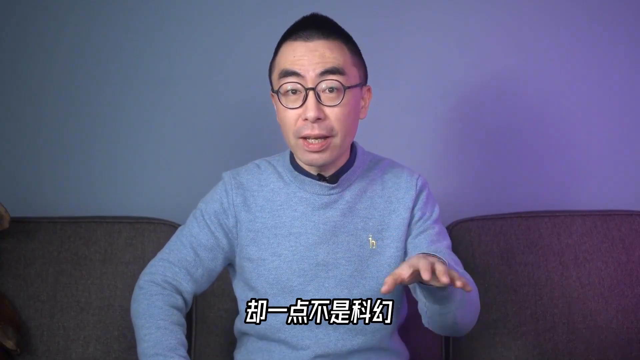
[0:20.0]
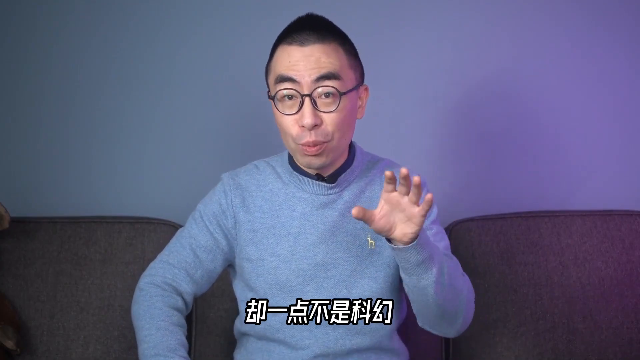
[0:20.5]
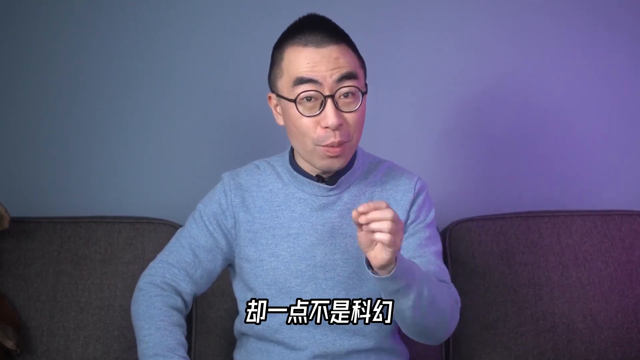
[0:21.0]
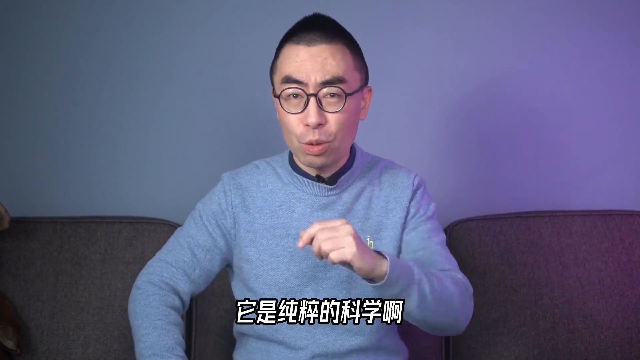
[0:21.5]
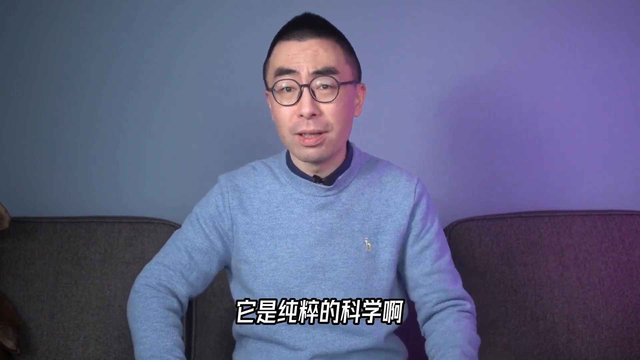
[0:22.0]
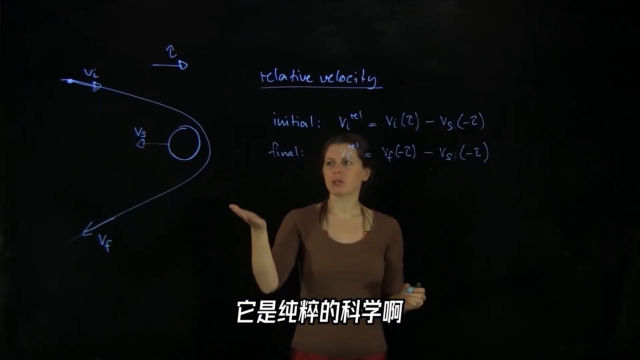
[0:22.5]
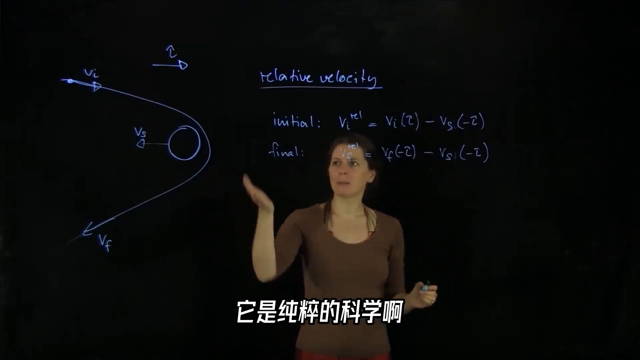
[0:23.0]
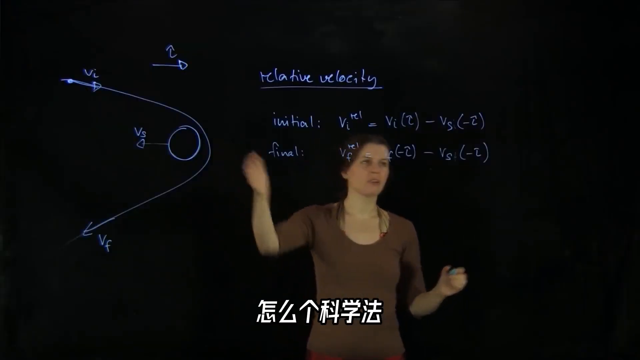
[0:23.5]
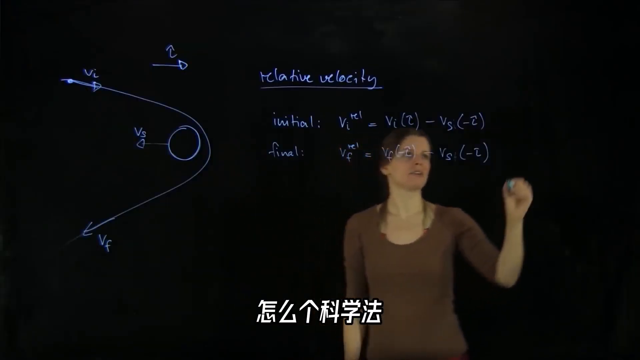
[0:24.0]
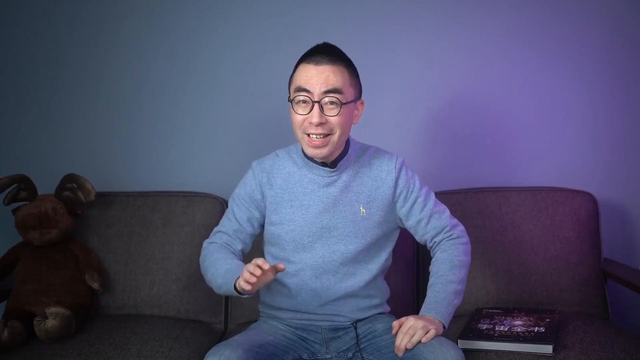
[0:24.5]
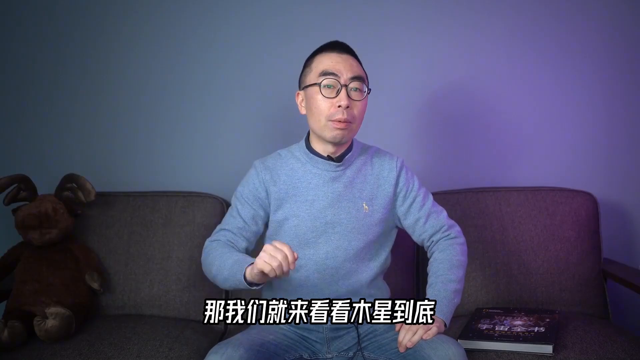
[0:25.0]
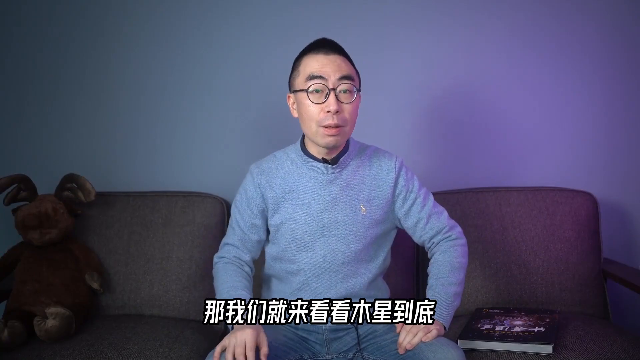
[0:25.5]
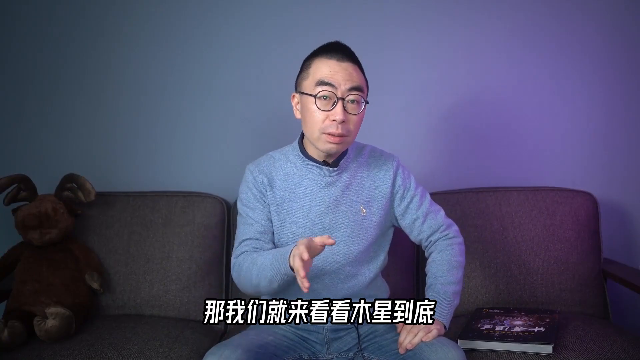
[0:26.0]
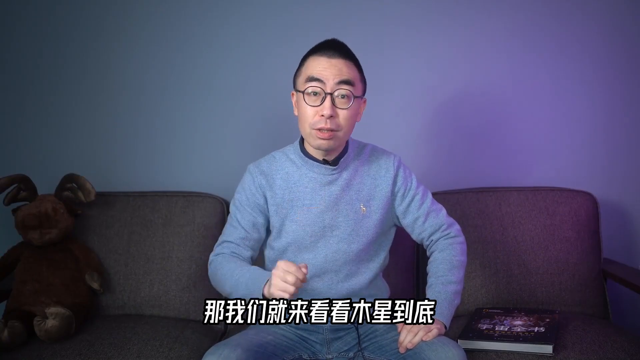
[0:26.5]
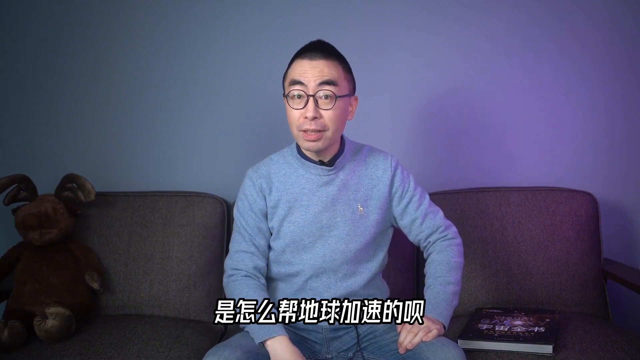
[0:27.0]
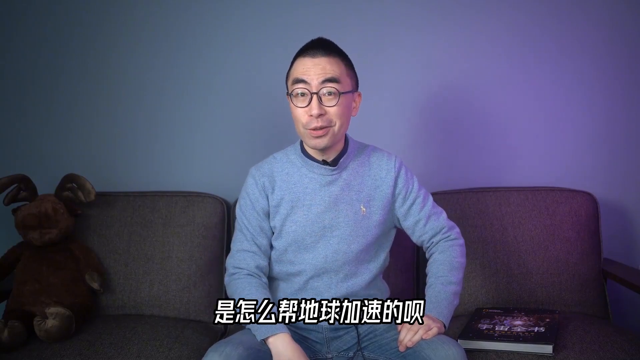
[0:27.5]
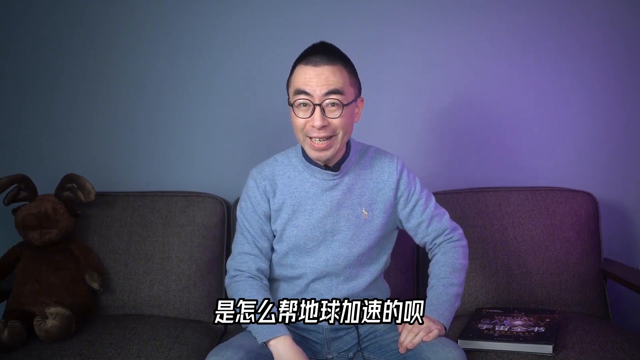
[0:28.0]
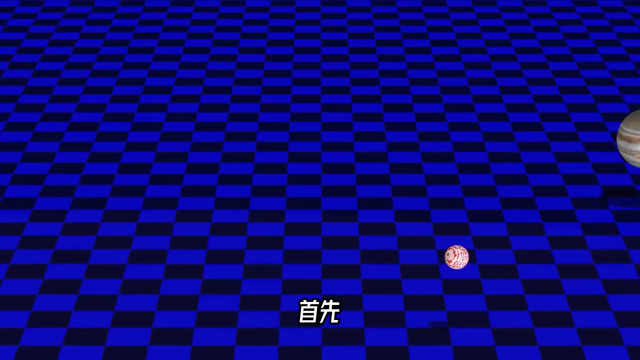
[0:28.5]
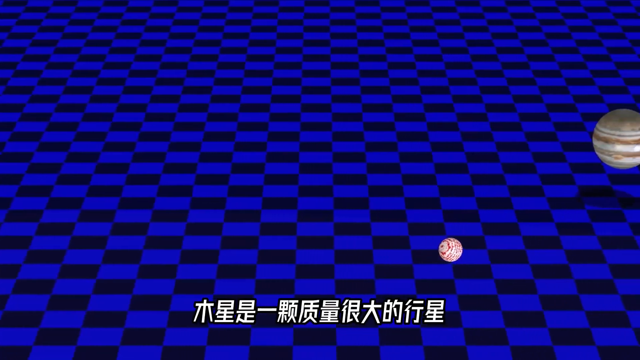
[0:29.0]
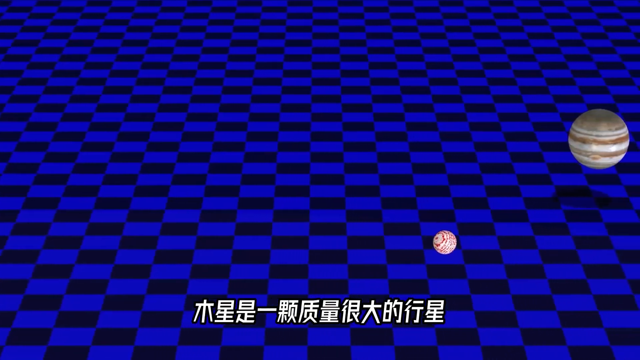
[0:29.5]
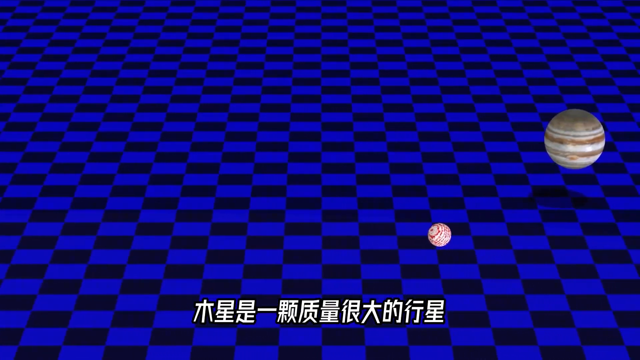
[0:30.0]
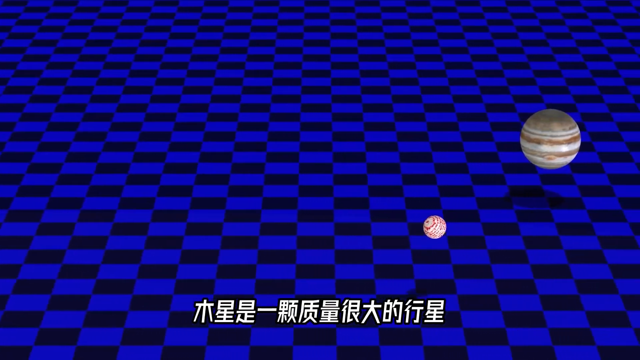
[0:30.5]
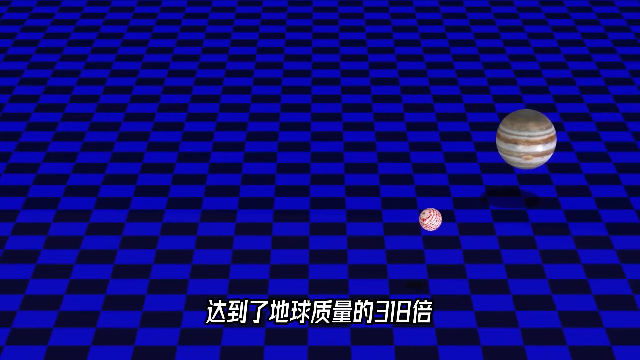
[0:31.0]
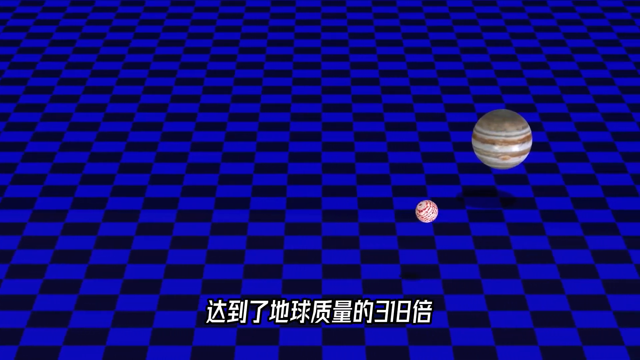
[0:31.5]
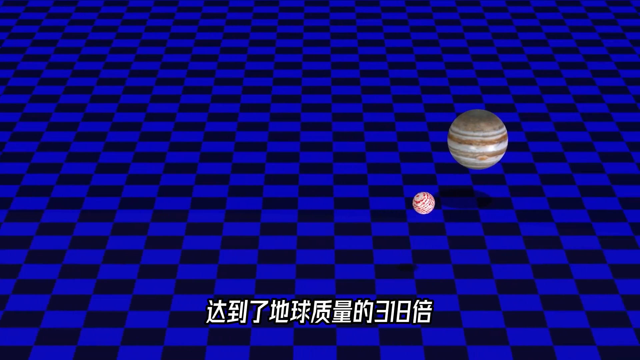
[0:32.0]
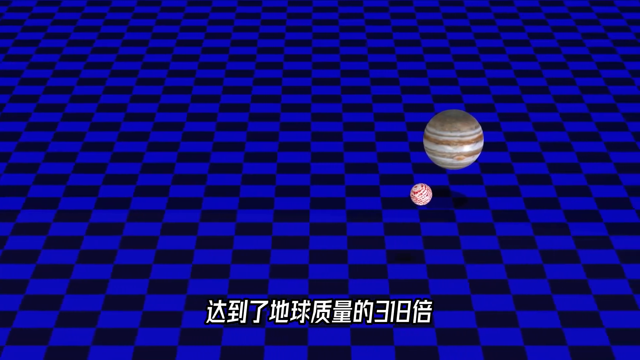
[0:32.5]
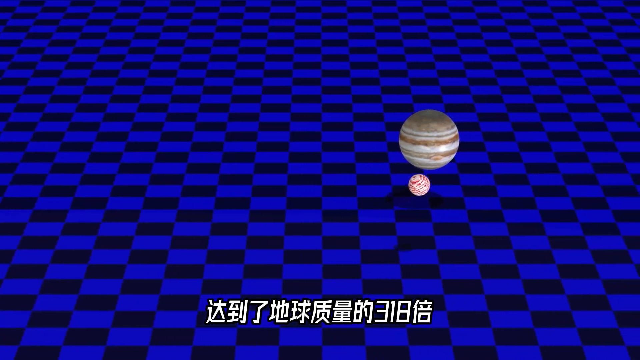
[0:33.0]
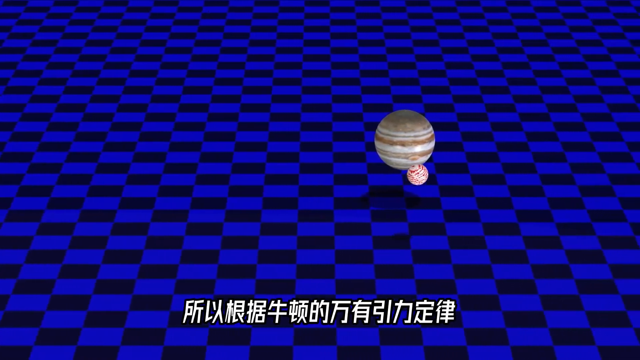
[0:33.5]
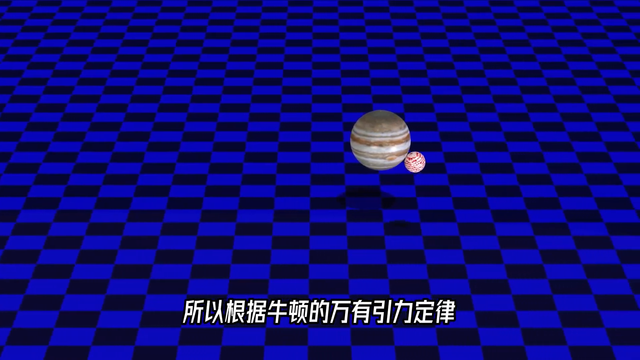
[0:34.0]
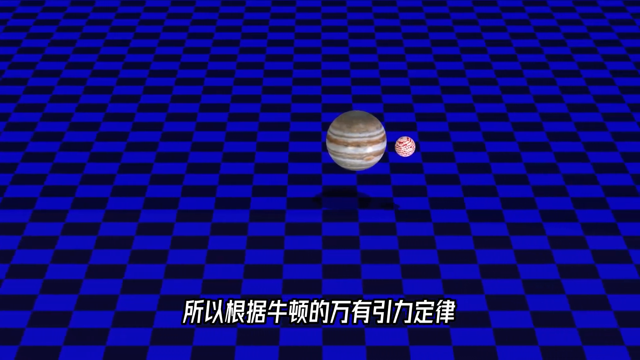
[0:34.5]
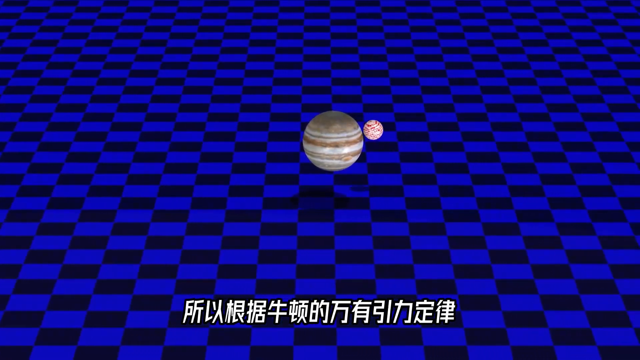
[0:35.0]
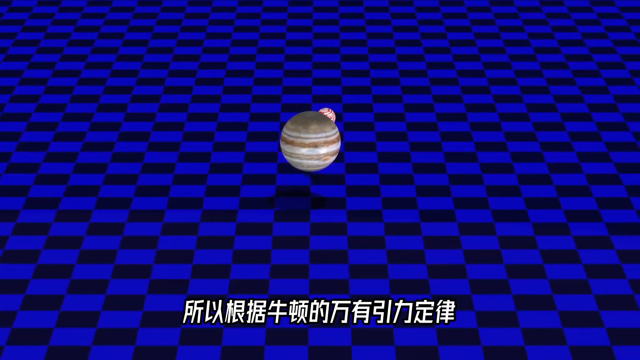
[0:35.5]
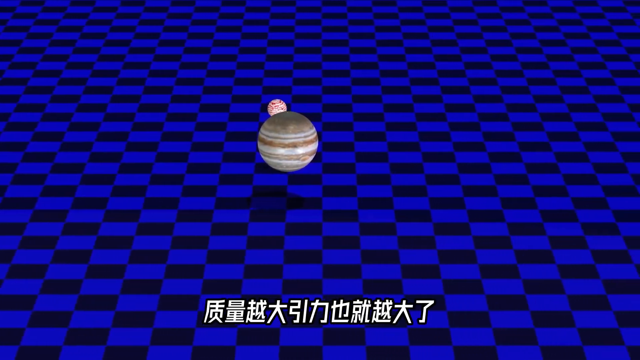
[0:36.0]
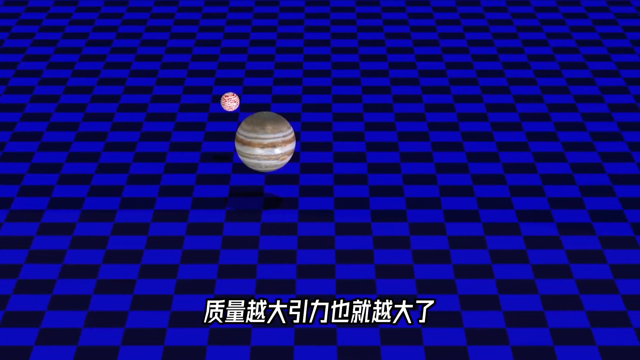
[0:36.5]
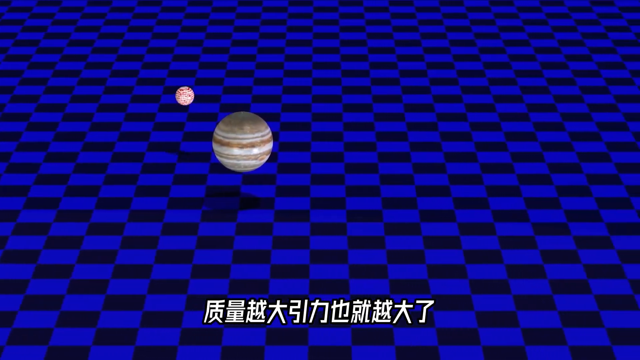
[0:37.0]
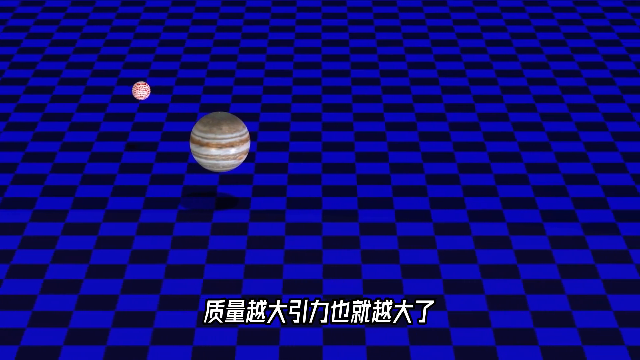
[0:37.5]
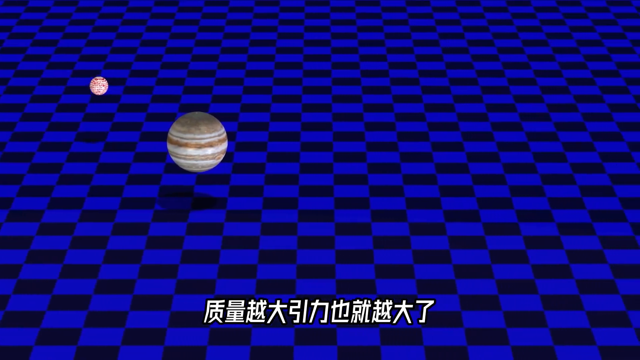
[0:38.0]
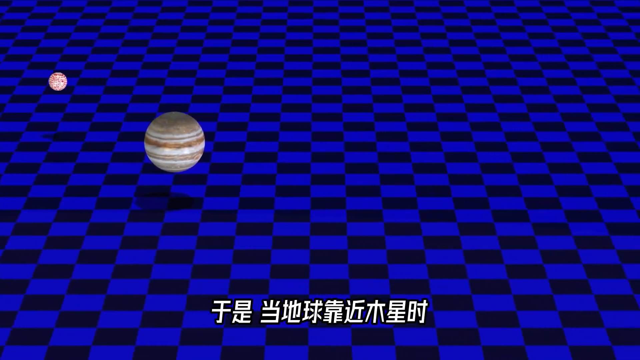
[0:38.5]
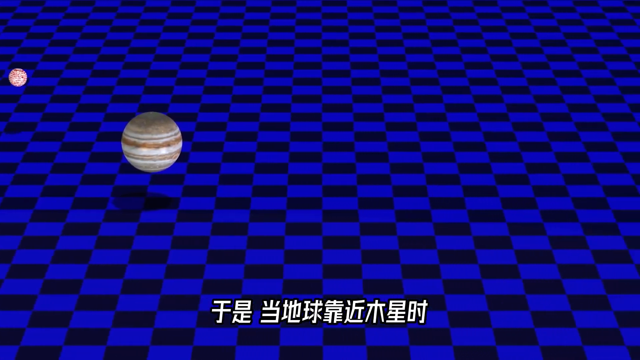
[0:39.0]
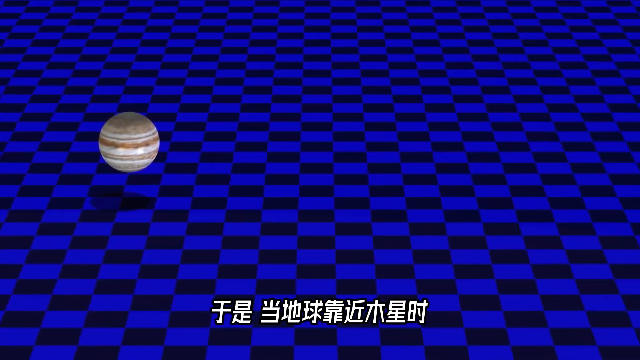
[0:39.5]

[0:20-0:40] Indoors, a man sits on a grey couch. He is Asian and wears a gray long-sleeve sweater, and he has a large circular pair of eyeglasses, very short black hair and thick black bushy eyebrows. He talks to the camera. After a couple of seconds he disappears, and the screen shows a Caucasian woman in a mid-sleeve brown t-shirt pointing to a diagram representing the theory of relative velocity. The shot returns to the Asian man on the couch; to his left, a brown stuffed animal that possibly looks like a moose sits on the couch next to him. A computer-animated screen follows, with a black and blue checkered background and two animated planets orbiting around one another.